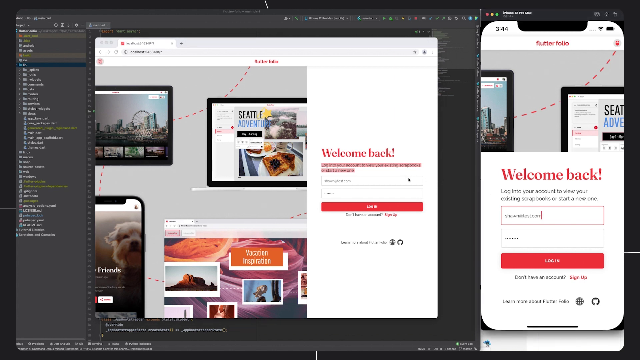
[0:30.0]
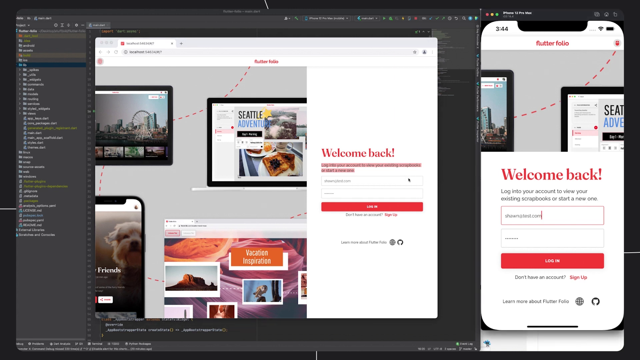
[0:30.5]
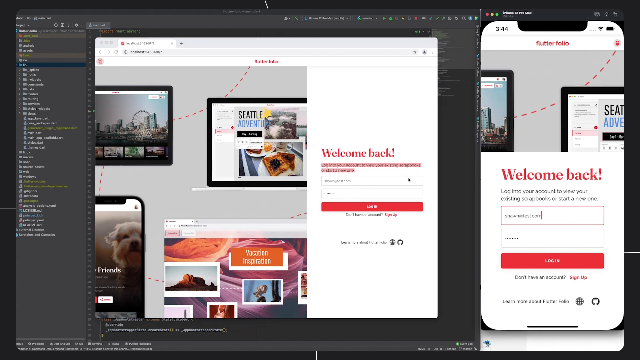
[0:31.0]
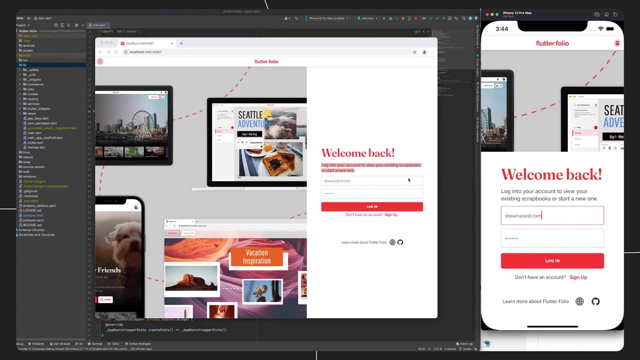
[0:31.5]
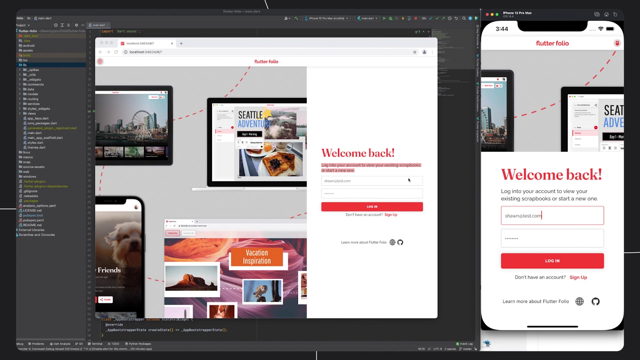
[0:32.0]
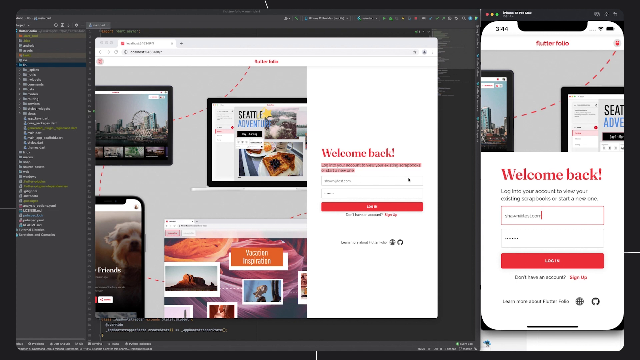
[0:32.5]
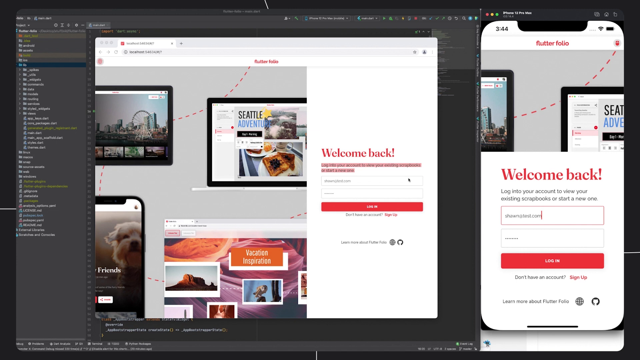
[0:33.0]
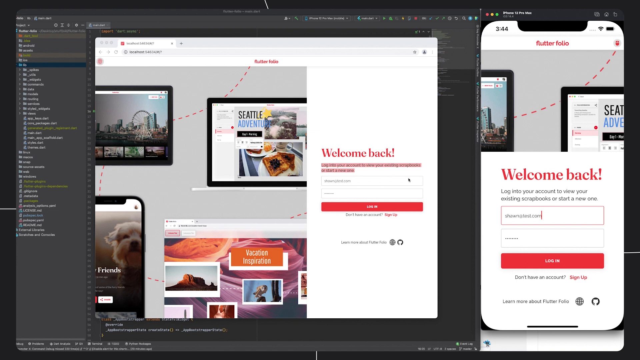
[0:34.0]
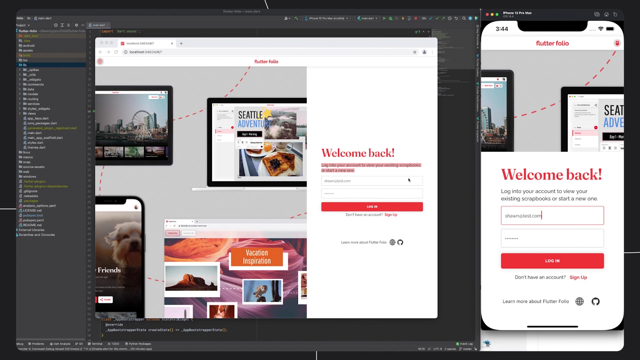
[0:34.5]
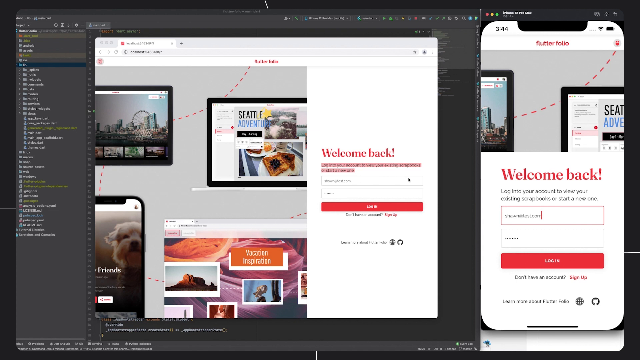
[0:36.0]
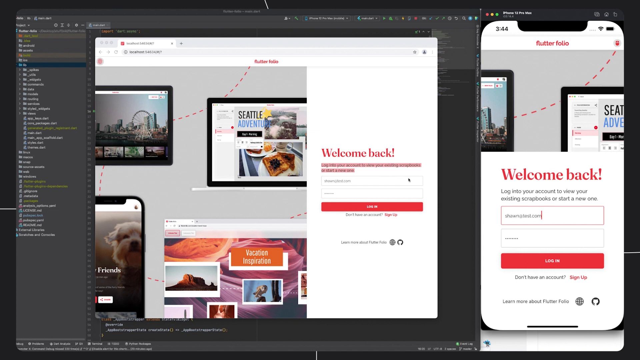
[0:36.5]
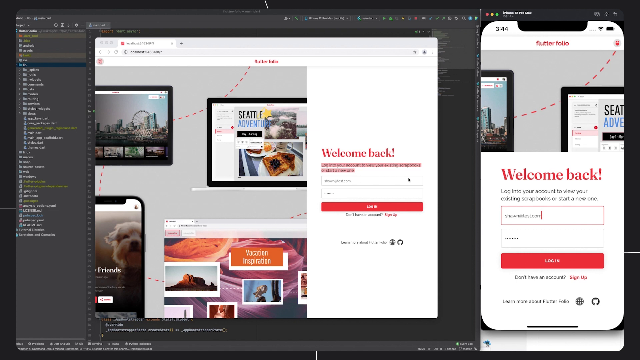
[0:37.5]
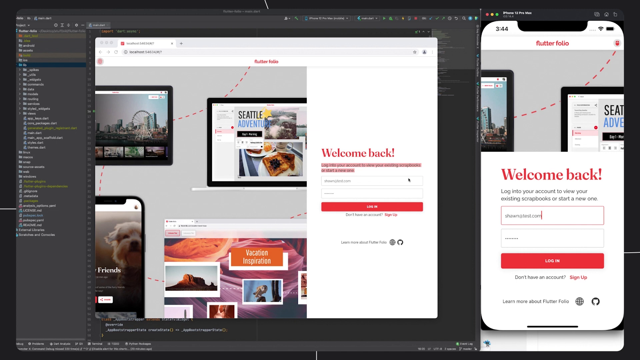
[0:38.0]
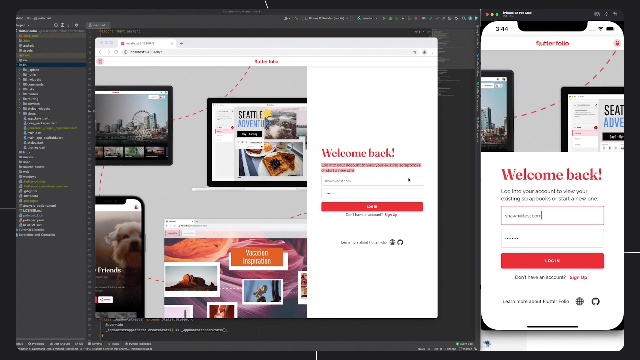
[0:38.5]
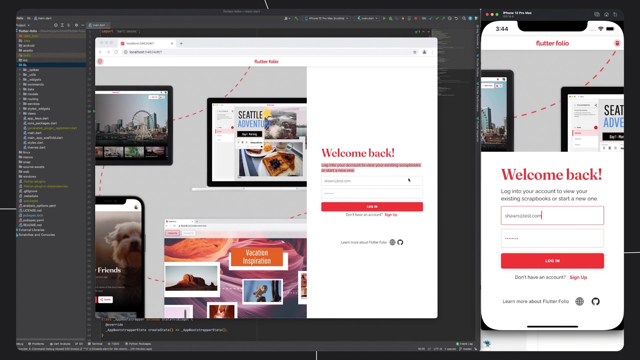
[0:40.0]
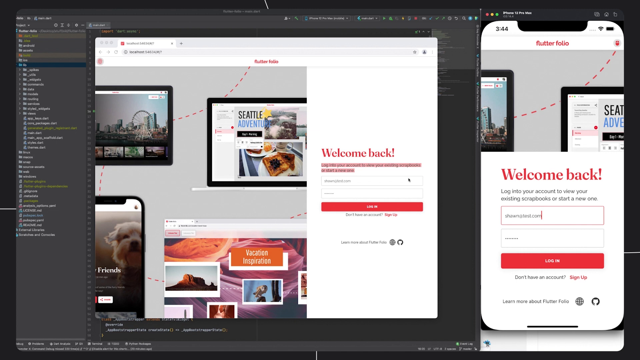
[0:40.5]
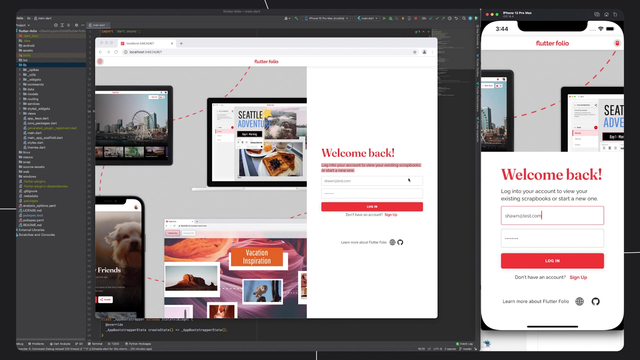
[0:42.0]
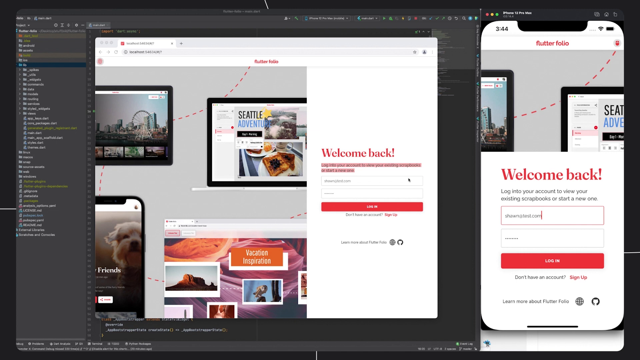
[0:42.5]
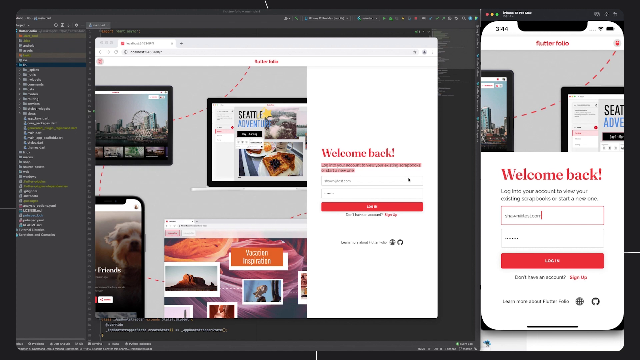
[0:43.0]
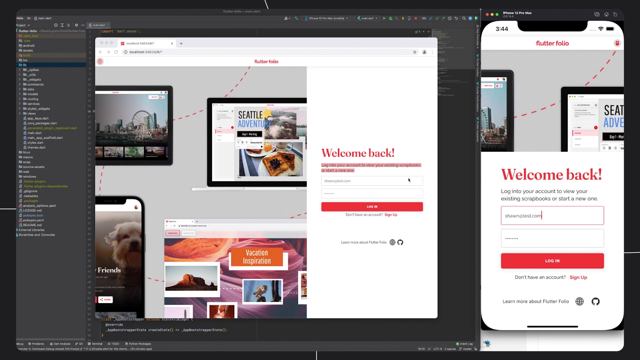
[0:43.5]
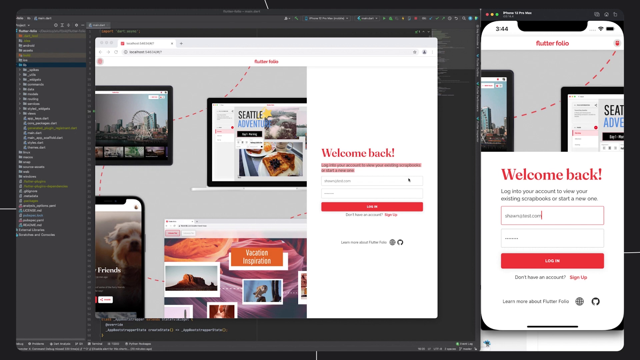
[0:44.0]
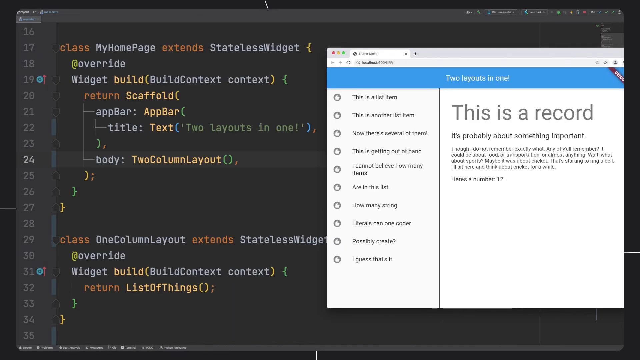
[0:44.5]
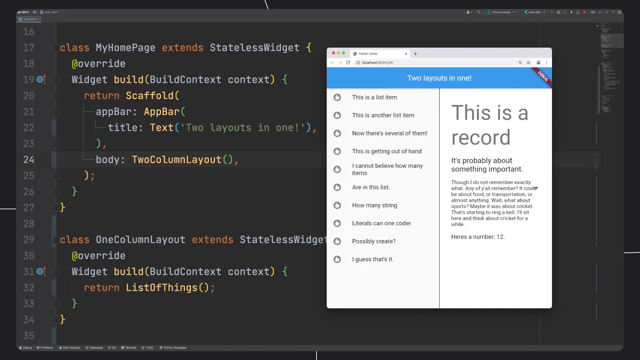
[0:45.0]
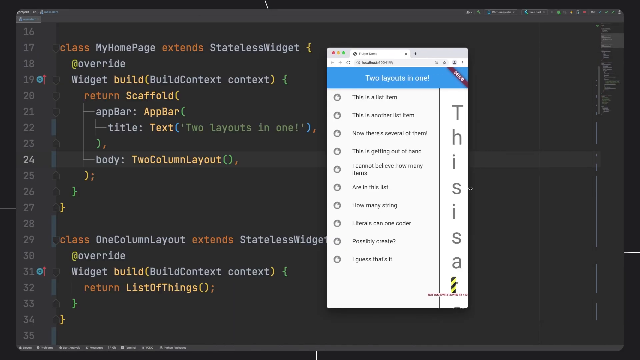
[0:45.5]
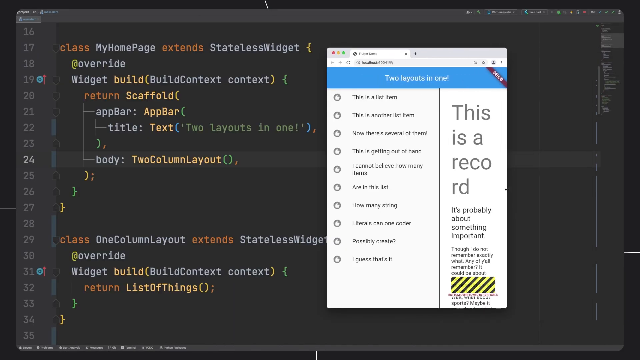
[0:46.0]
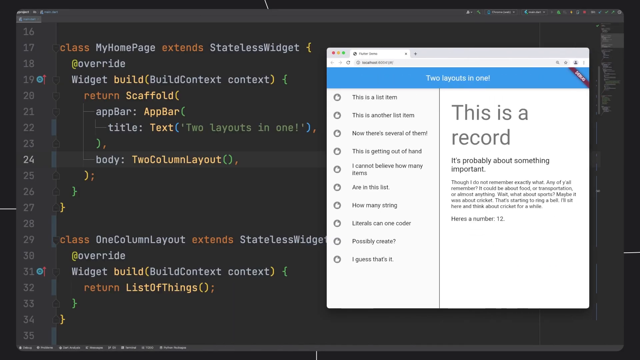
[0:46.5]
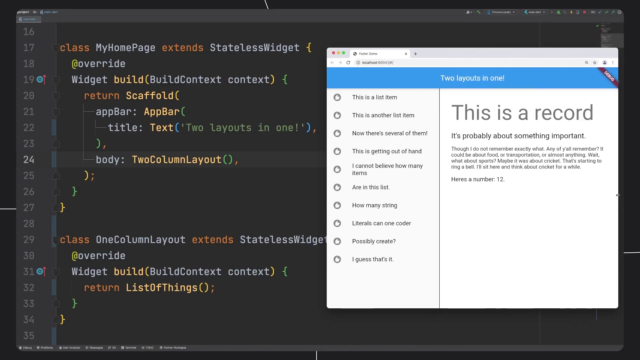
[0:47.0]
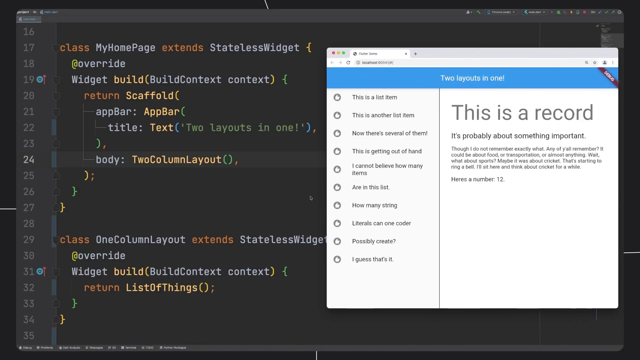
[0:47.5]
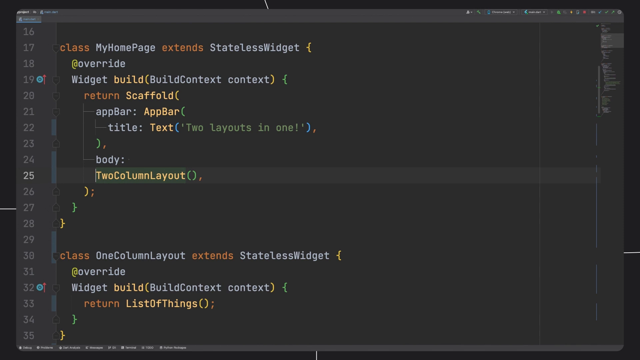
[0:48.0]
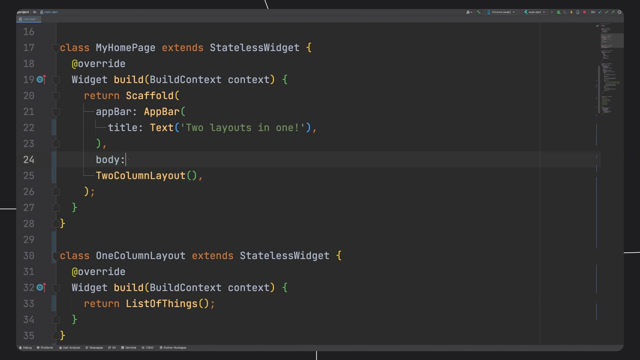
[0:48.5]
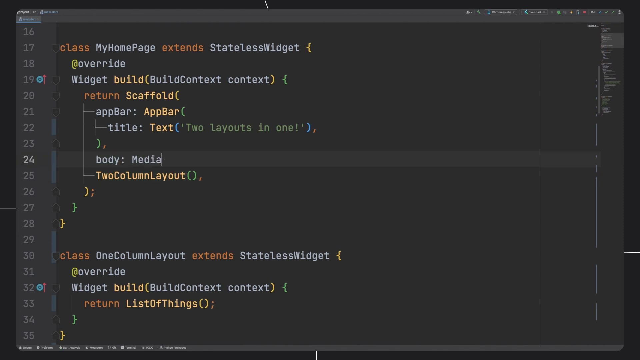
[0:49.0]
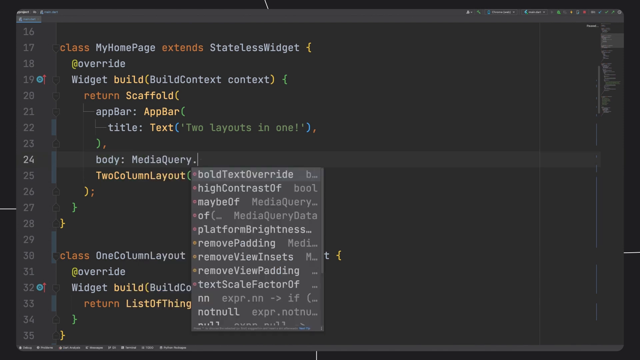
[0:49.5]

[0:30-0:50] Different wallpapers are visible, with a puppy next to one of them. He then starts designing something and types something on the other side, after which the view goes back to the screen showing different types of designs. A phone shows the time as 3:34 and a Wi-Fi connection. A portal appears where the user needs to log into the app to do what he wants in it. One design looks like a slice of bread made to look like a house. The view zooms in and out of the application. This is a developer page, where the developer is trying to create an application.